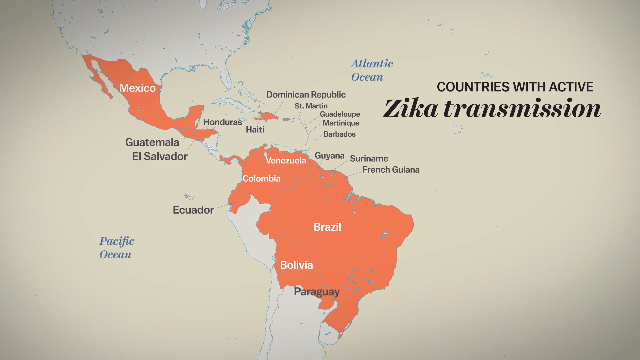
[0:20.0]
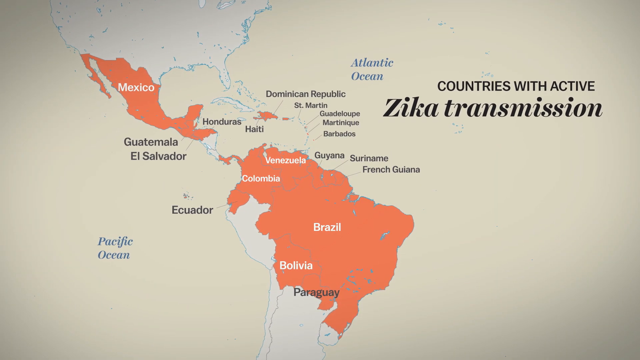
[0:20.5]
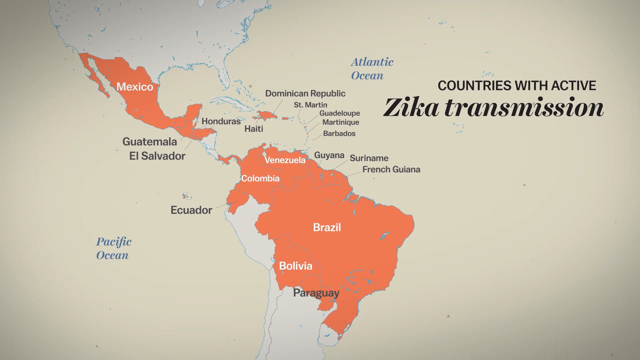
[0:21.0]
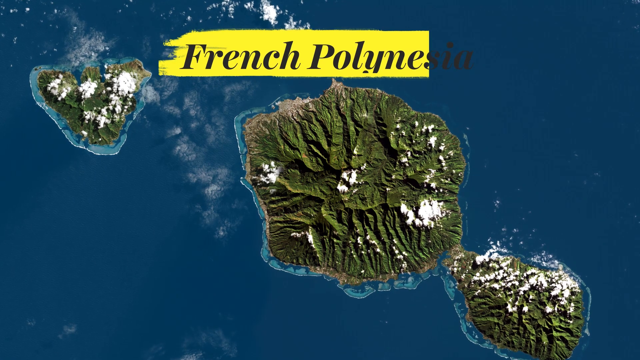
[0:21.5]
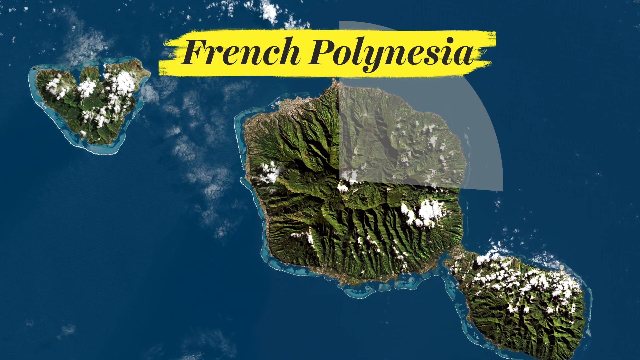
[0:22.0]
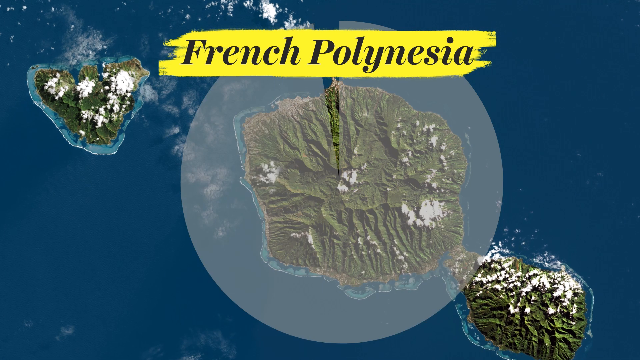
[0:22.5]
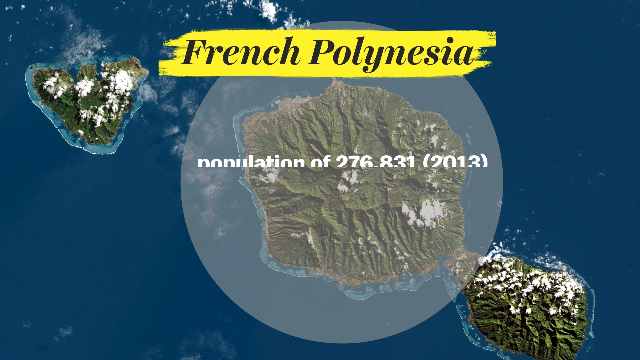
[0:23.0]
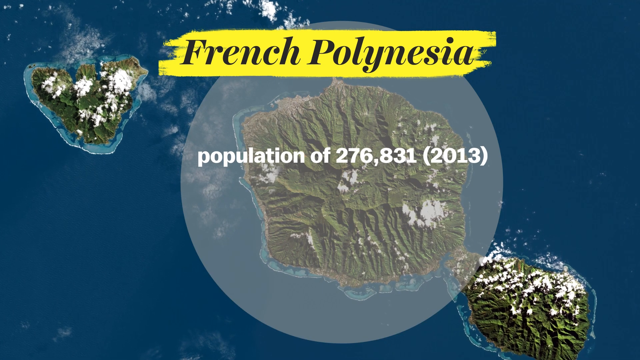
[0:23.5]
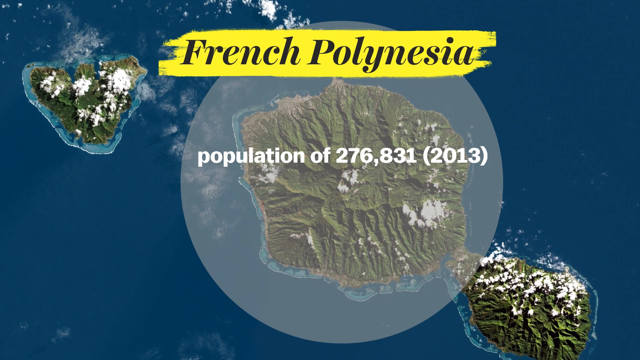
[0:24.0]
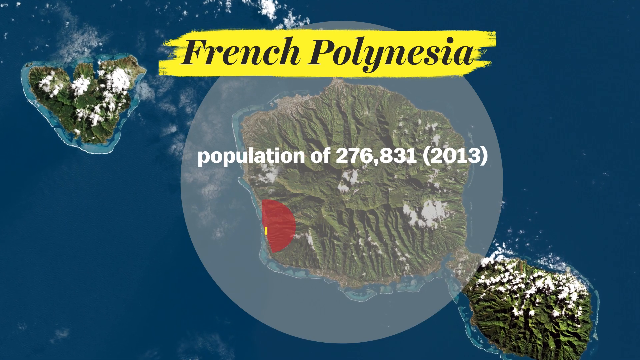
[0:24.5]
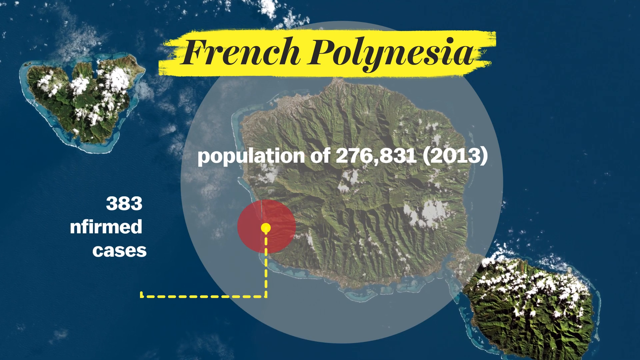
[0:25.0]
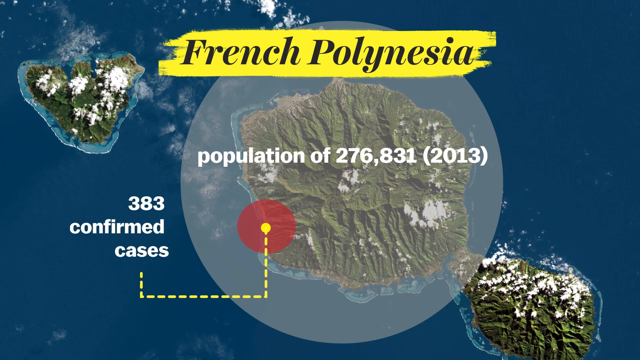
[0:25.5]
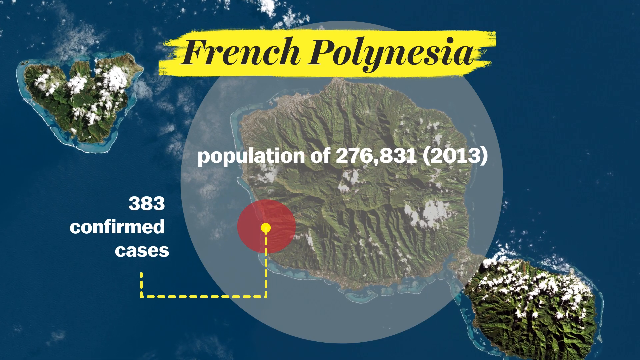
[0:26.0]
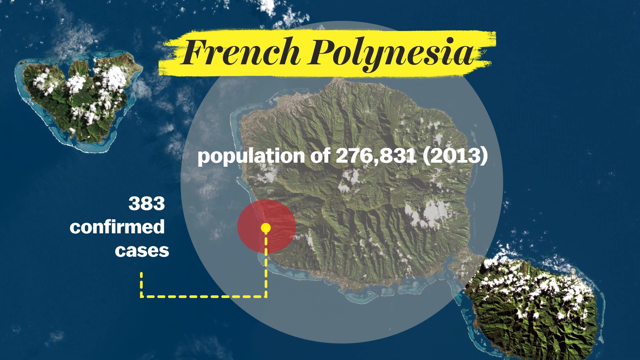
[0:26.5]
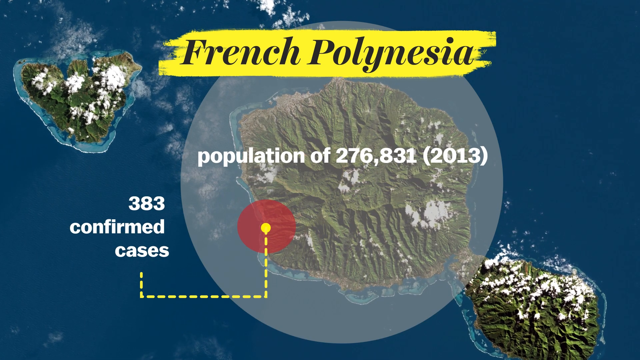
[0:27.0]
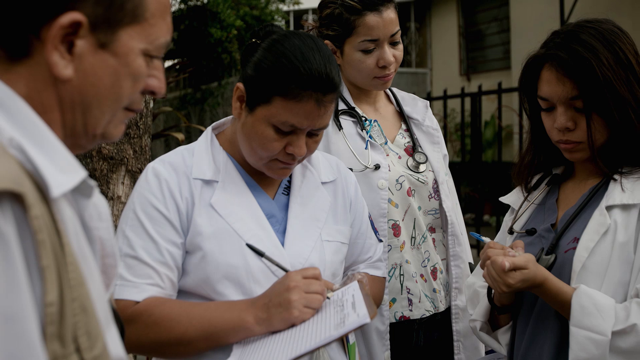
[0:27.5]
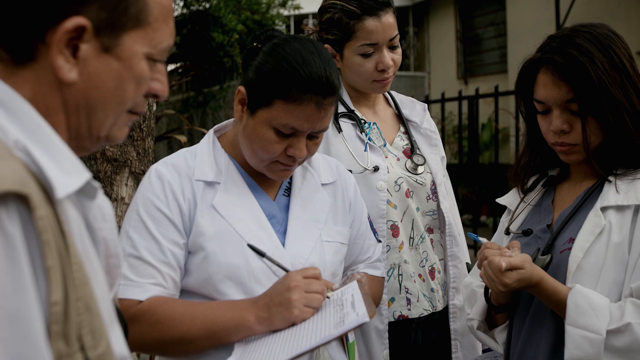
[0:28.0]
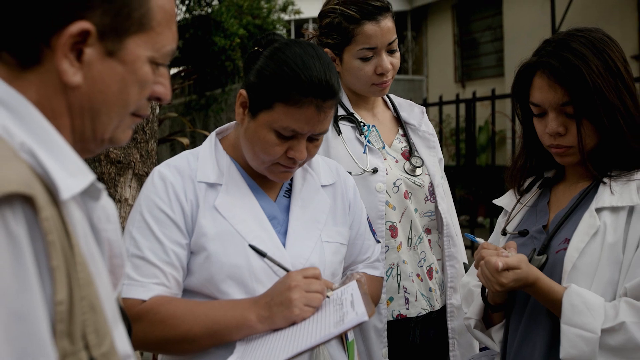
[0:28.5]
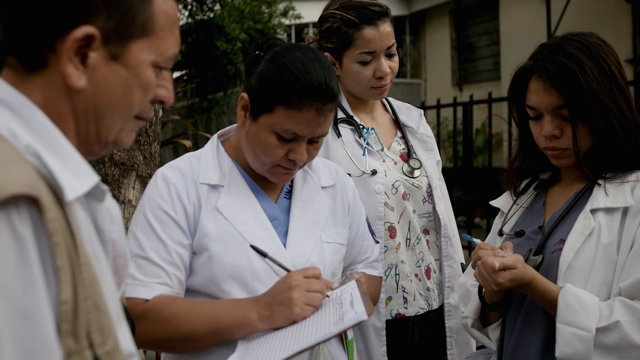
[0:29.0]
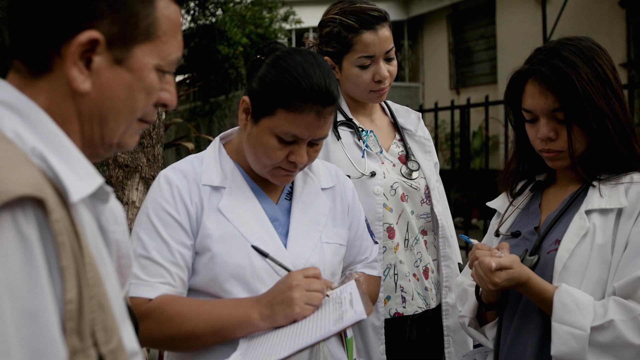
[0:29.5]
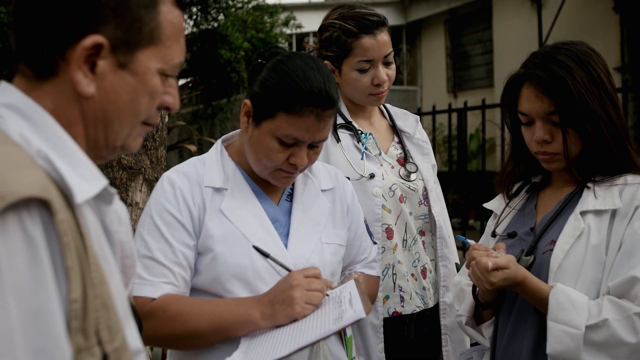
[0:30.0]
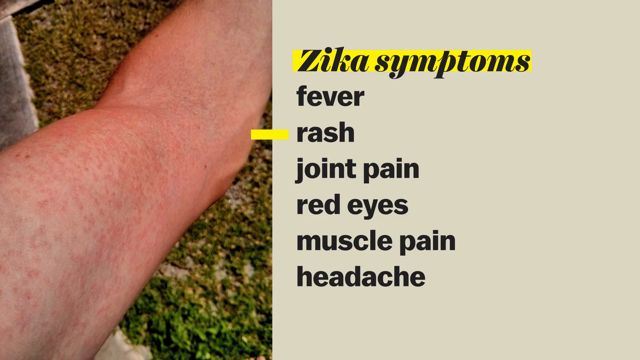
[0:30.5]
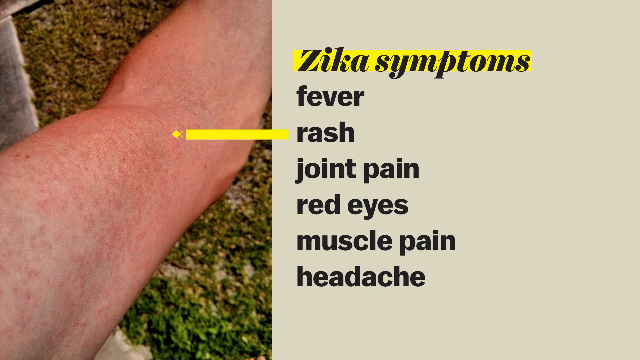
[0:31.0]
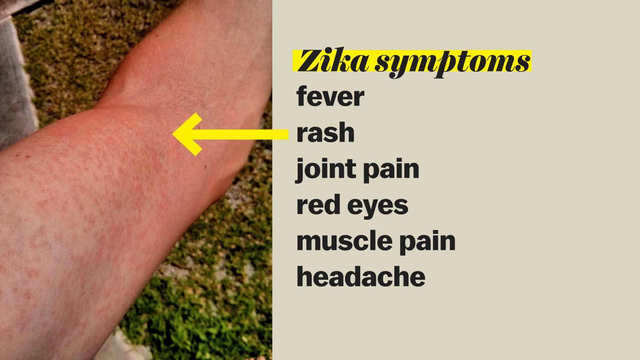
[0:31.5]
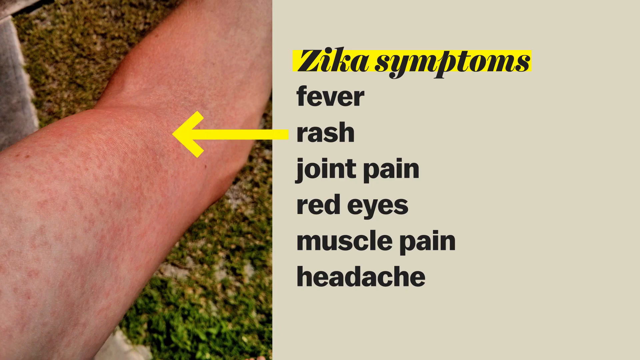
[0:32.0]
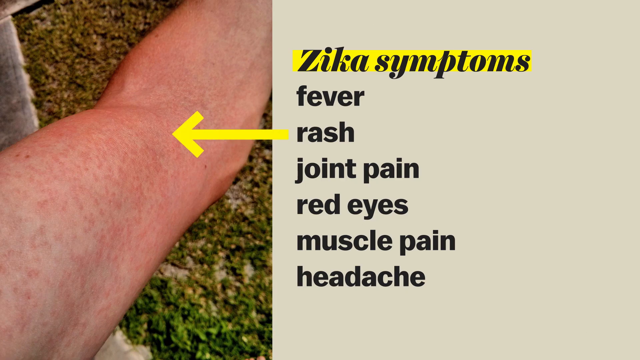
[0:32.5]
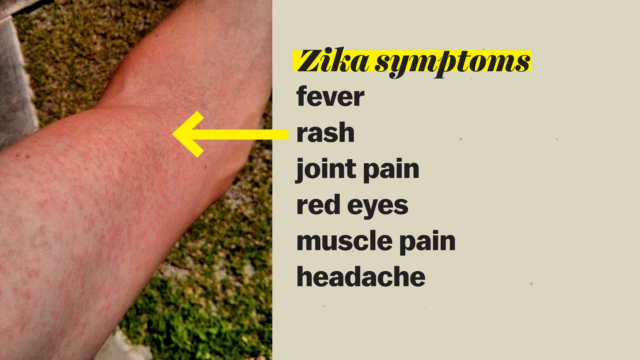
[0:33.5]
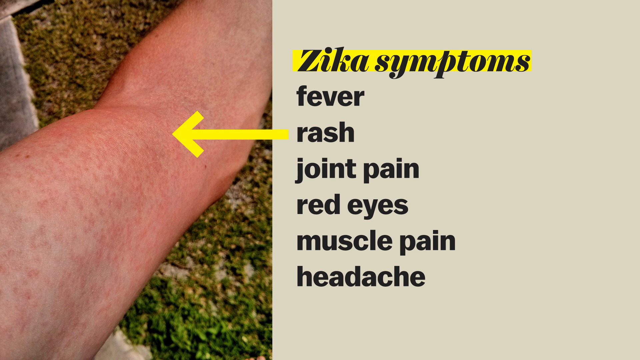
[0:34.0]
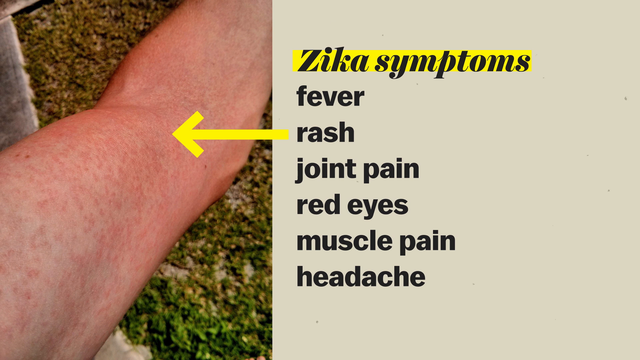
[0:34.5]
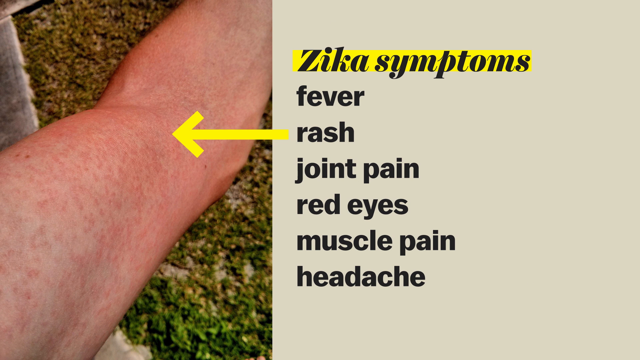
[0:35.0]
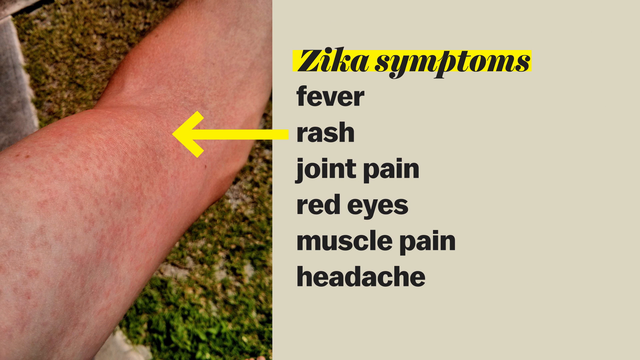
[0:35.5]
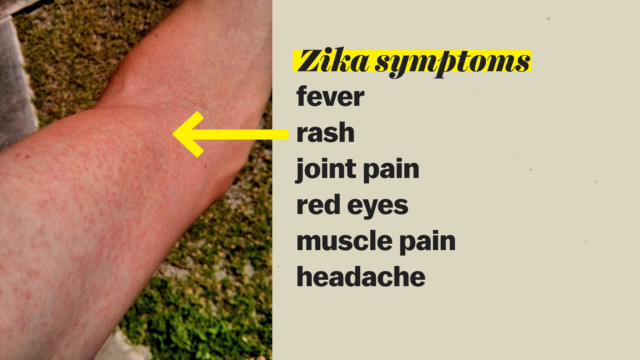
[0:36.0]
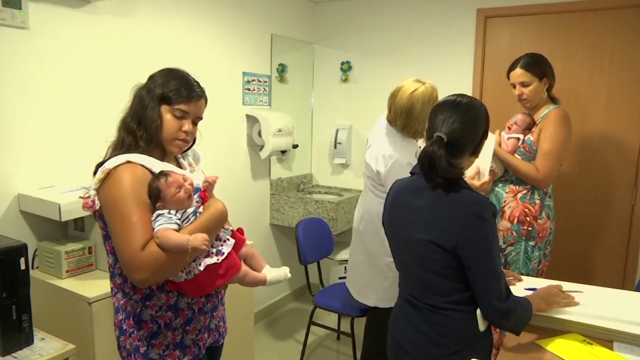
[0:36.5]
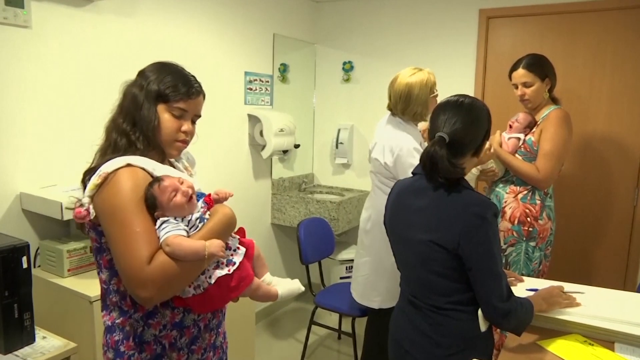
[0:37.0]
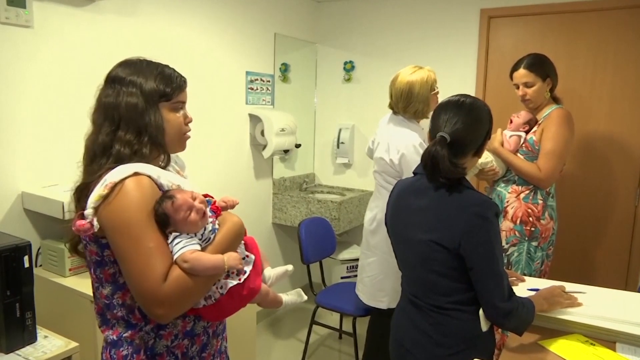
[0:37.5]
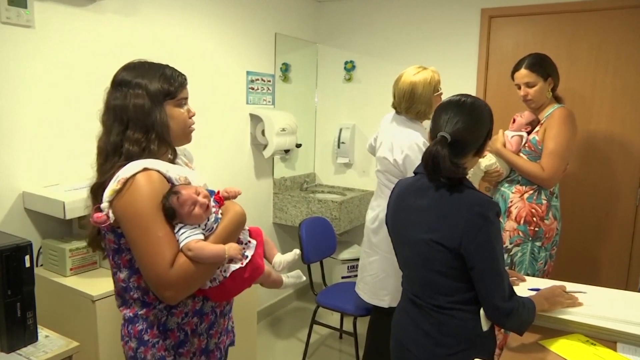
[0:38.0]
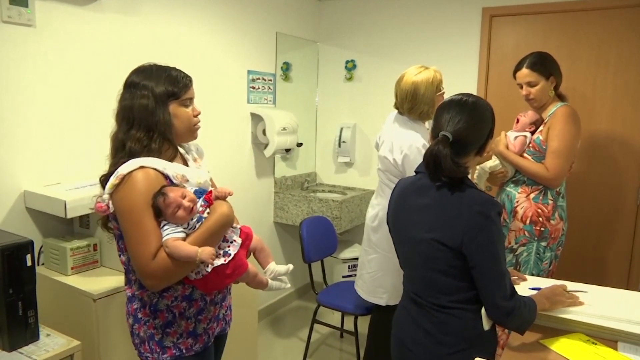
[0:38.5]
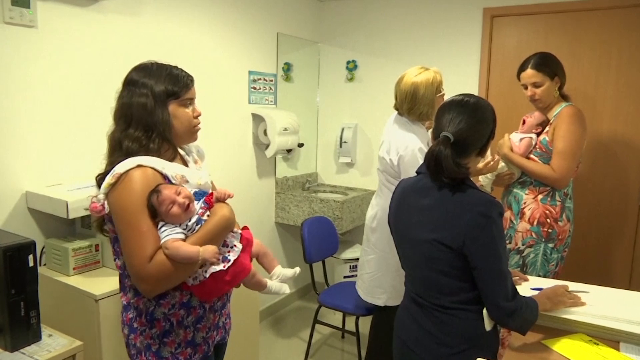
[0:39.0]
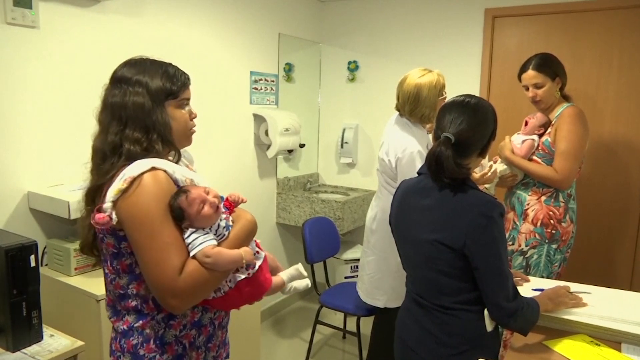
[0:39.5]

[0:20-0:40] The Zika transmission graphics continue with French Polynesia, showing a population of 276,831 in 2013, over a satellite image of the ocean and French Polynesia. It shows 383 confirmed cases of the disease in this area. Nurses or doctors appear. The symptoms are listed: fever, rash, joint pain, red eyes, muscle pain and headache. Babies are shown. Mexico is also marked in the red zone of Zika transmission, but the hotspot is the French Polynesia area.